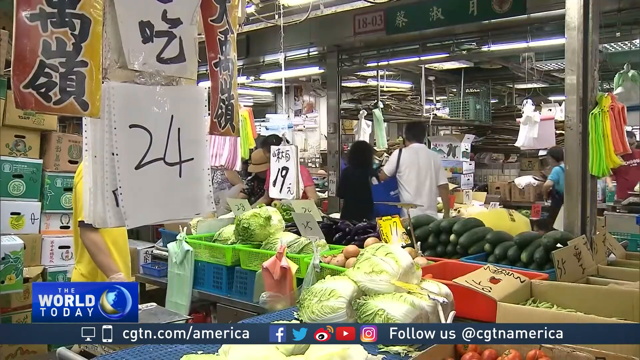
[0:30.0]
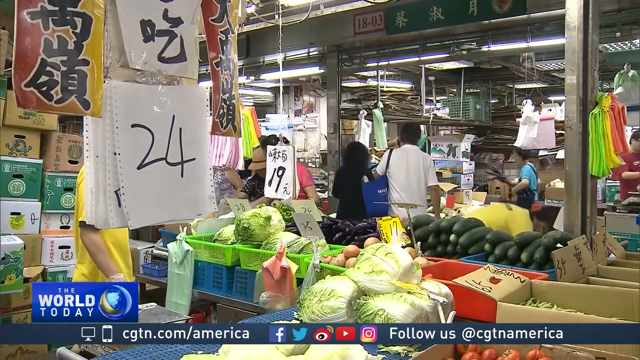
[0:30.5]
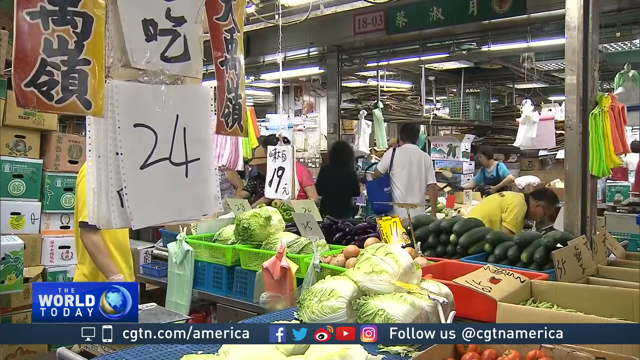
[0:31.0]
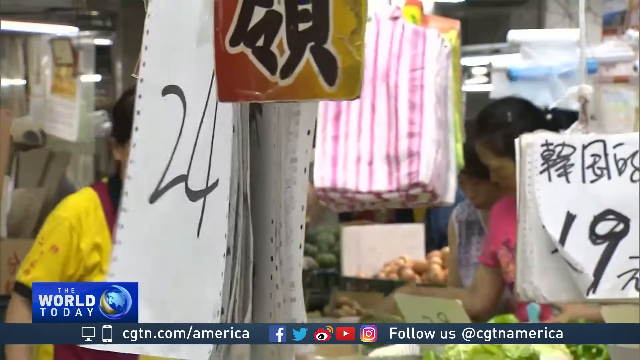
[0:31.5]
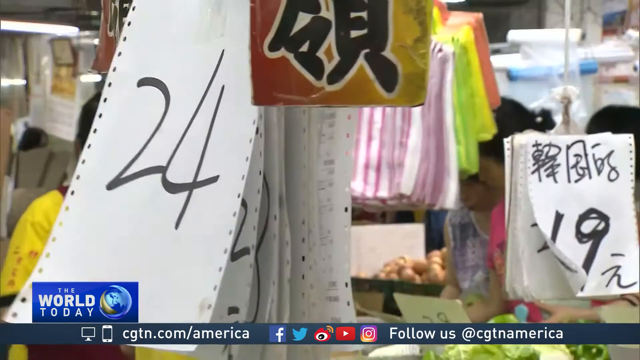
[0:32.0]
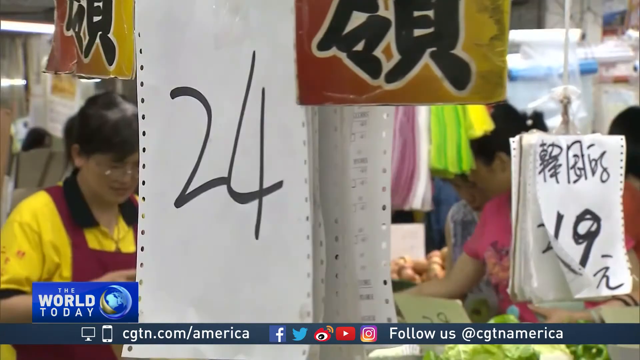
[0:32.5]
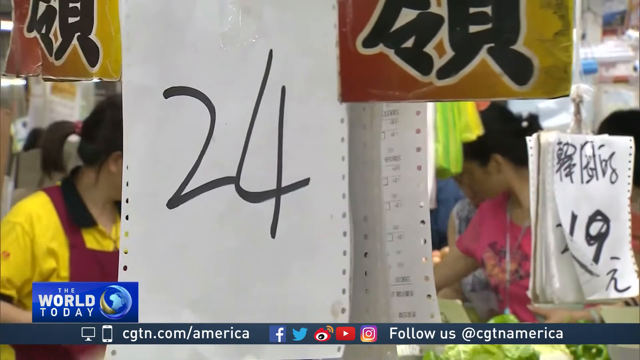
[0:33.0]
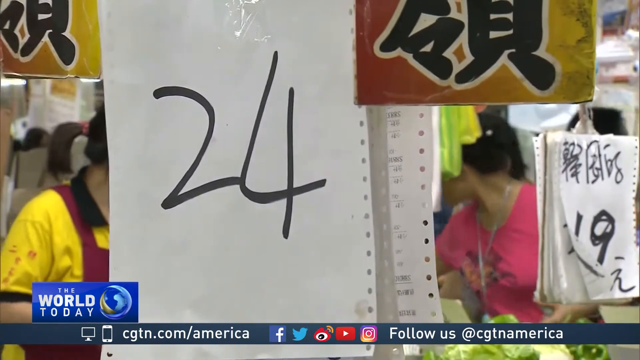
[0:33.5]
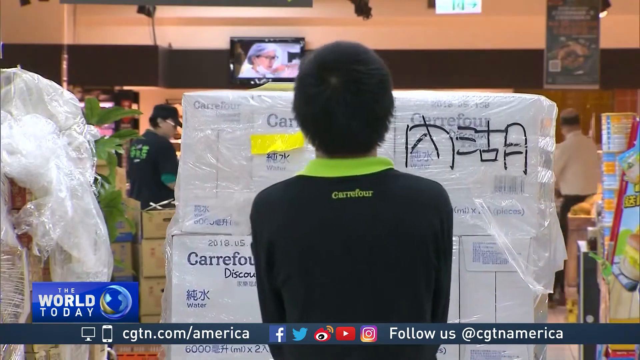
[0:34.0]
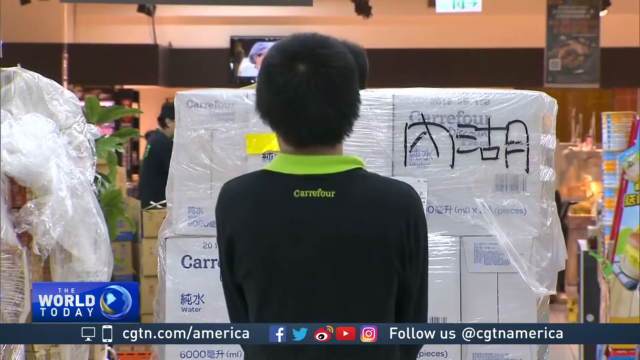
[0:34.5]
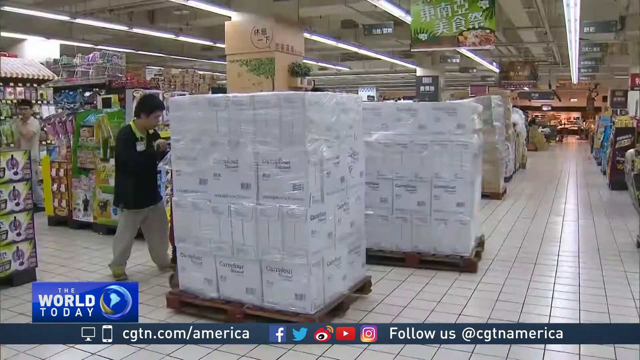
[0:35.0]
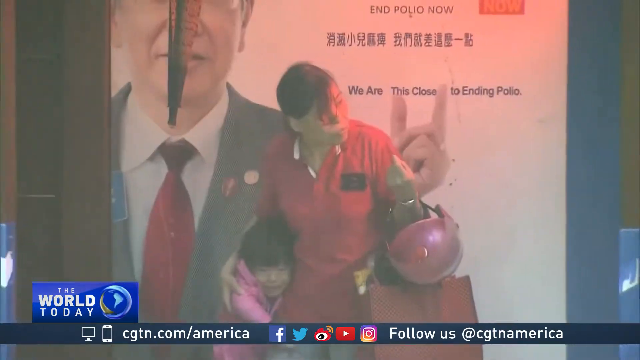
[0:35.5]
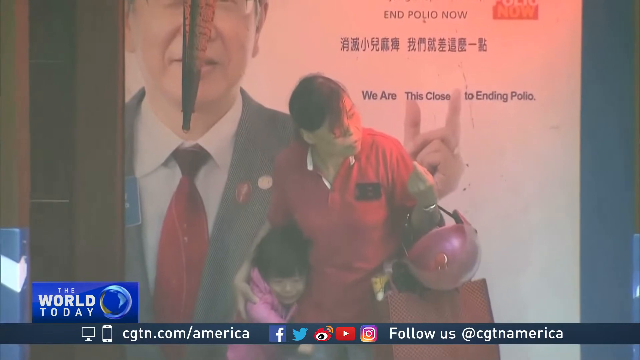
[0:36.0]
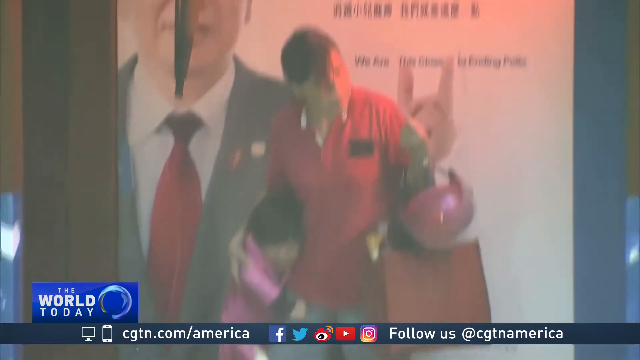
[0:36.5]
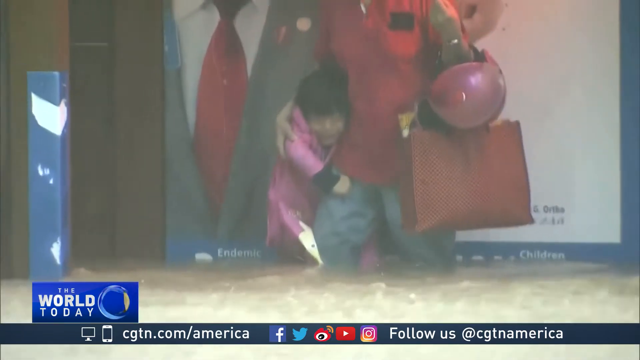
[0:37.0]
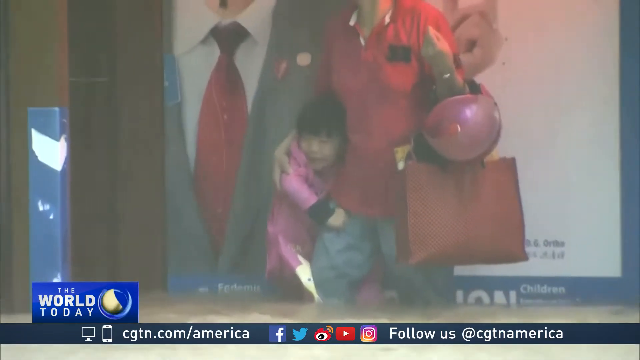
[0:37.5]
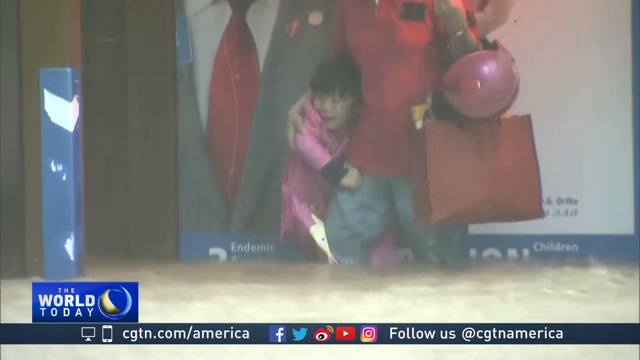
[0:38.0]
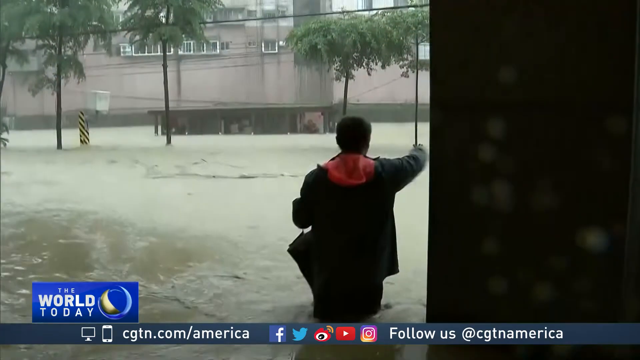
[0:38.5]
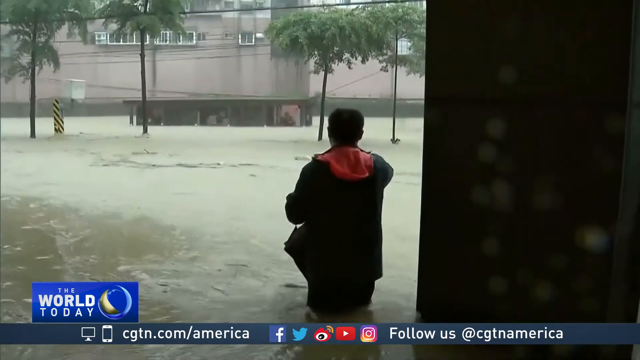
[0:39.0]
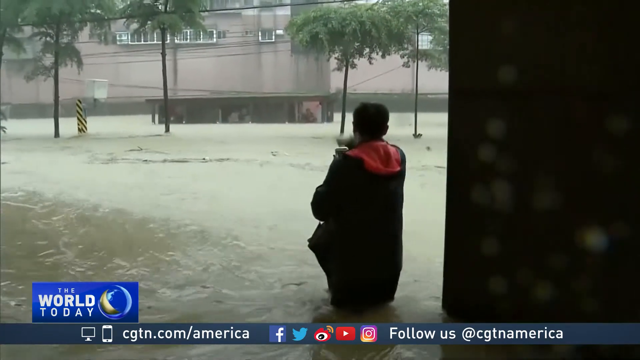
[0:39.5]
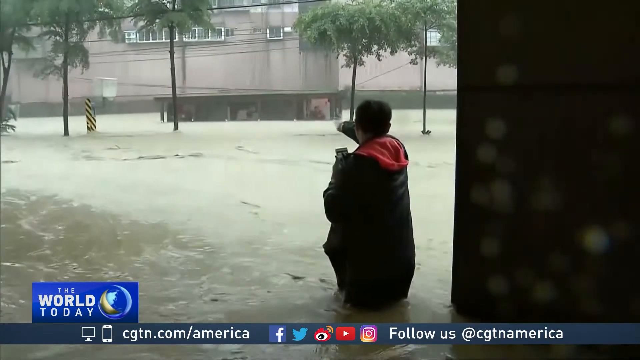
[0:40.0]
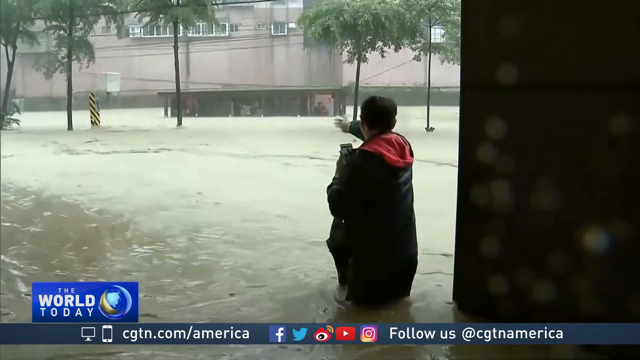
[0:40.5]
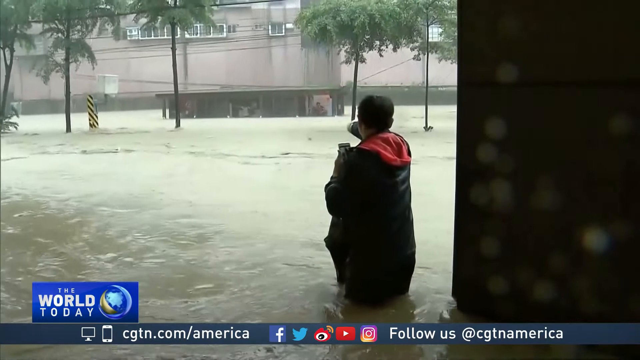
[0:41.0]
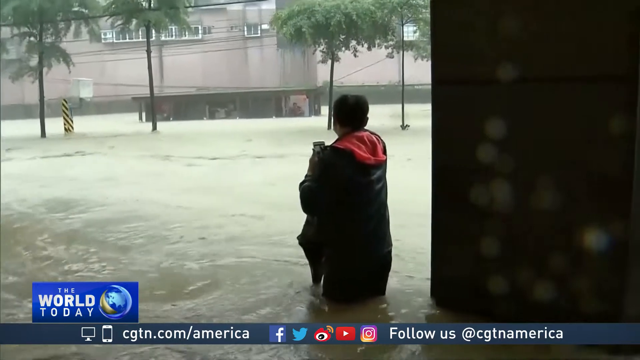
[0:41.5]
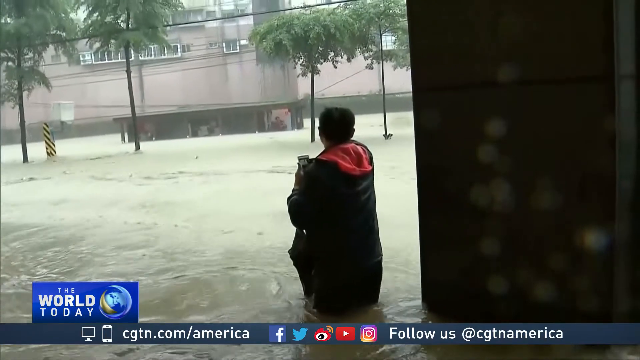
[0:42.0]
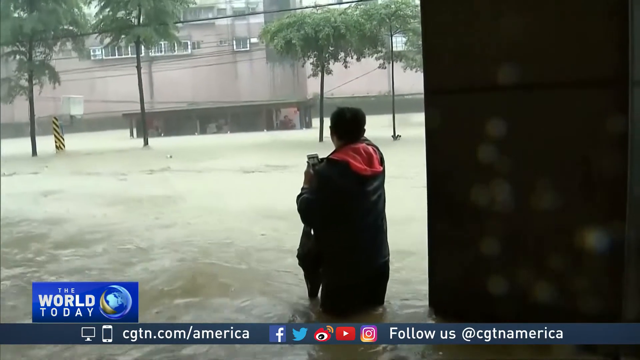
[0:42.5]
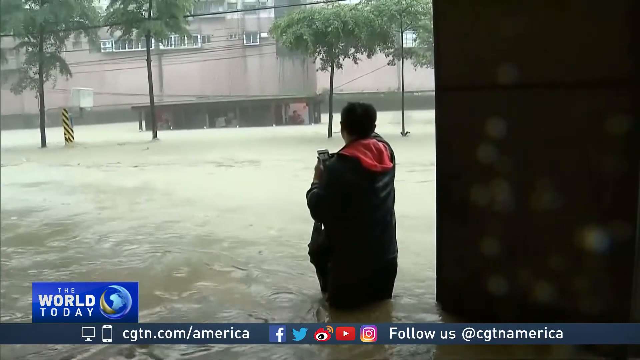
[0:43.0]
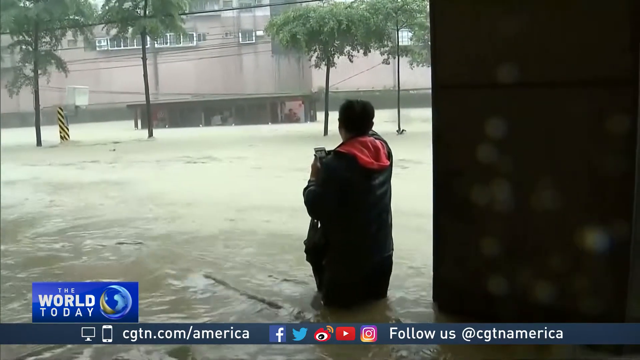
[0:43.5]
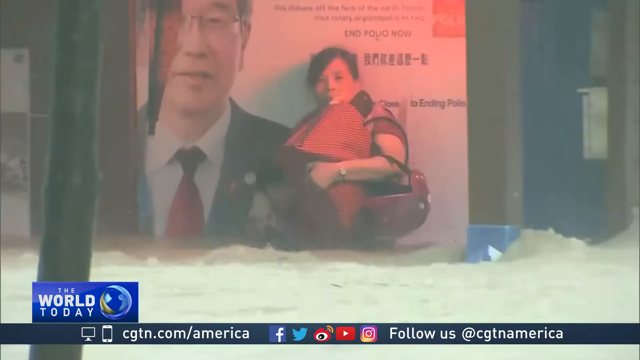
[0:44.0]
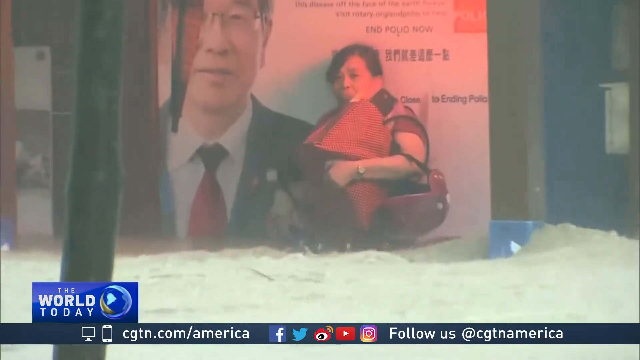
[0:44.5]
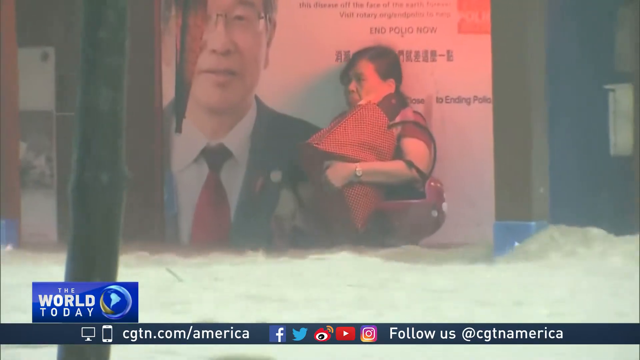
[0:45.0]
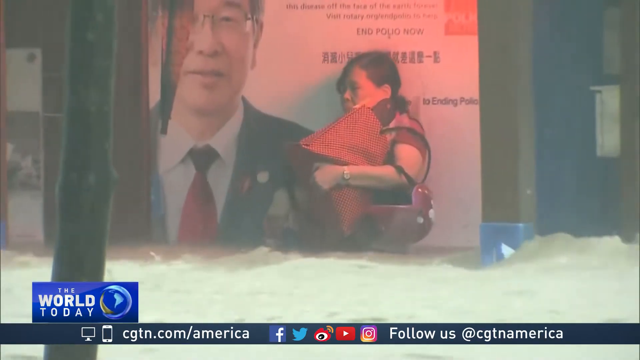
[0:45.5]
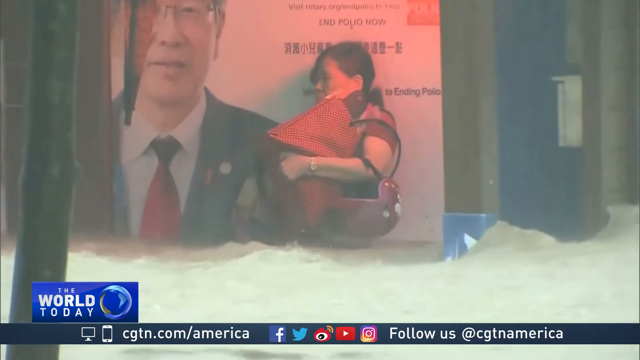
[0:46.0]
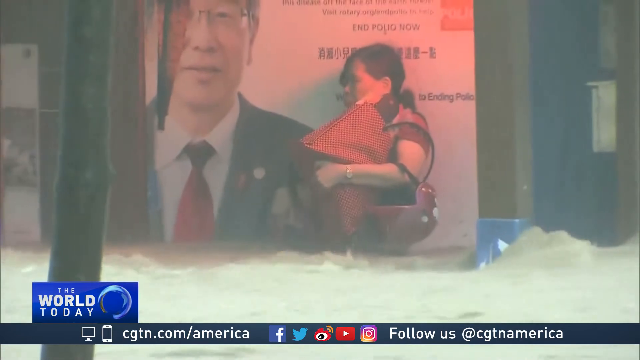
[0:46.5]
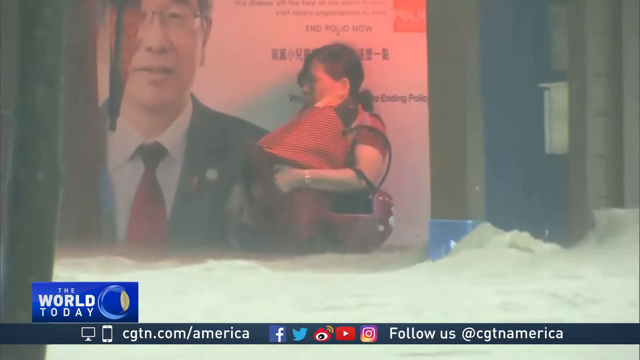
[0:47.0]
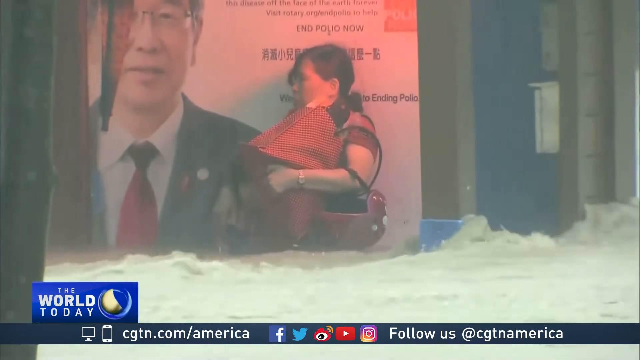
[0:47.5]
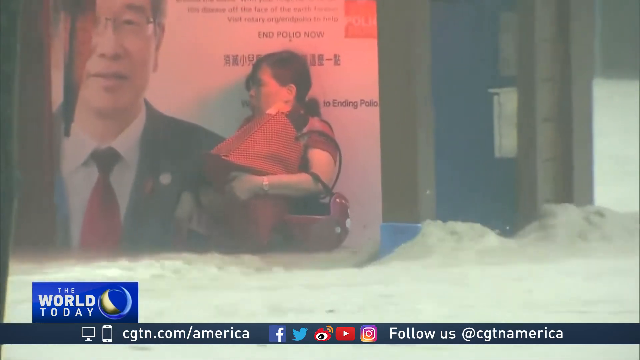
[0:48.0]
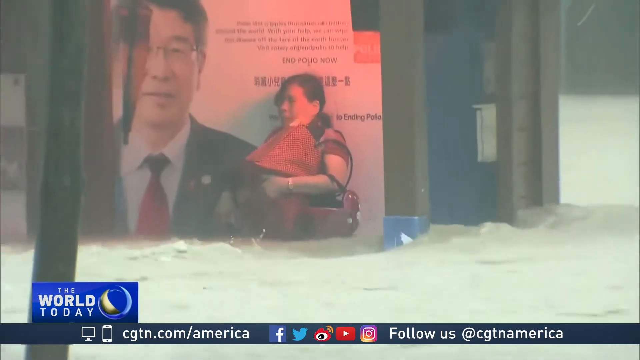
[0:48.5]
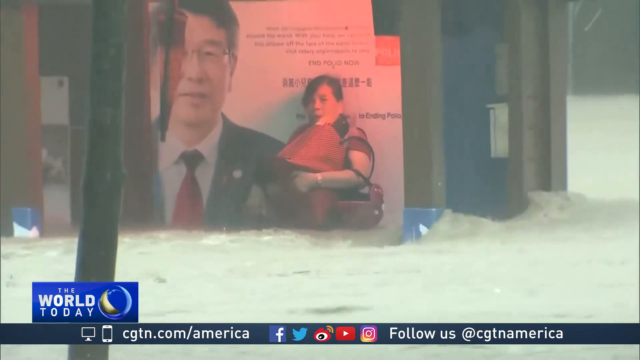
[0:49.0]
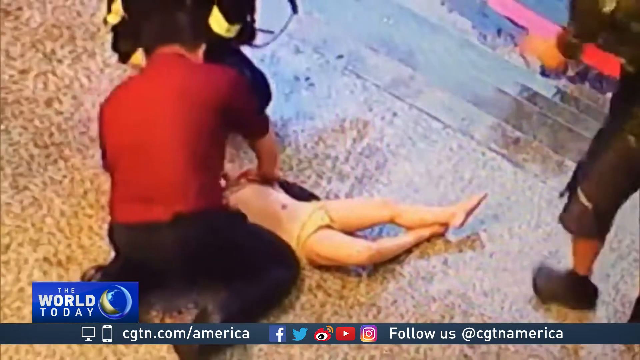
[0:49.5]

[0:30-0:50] Close-ups show some of the items for sale, the "24" sign and other signs with characters on them. A man seen from behind pulls a large pallet of what looks like white boxes wrapped in plastic; the back of his shirt collar and the boxes read "car for," suggesting this may be the grocery store. Next, a close-up shows a woman who looks like she is huddling one of her children as they seem to be figuring out whether to cross the floodwaters. A man seen from behind stands a little over knee-deep in floodwaters moving to the left. The view switches back to the woman deciding whether she can walk through the floodwaters, which are almost waist level. Then a man in a red shirt and black pants appears to be tending to a child who seems to be wearing only underwear and looks like they are lying flat; there seem to be people standing on either side, possibly first responders.